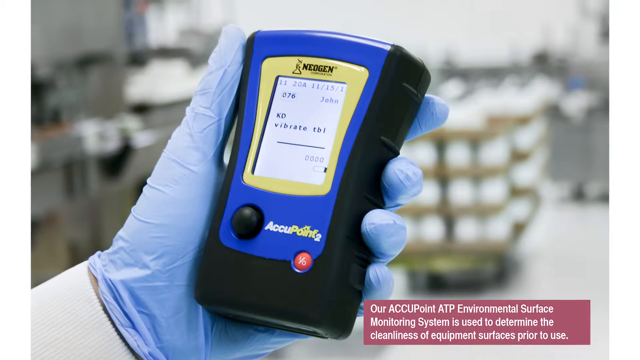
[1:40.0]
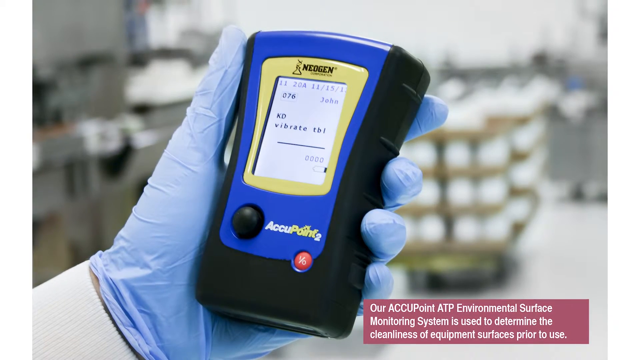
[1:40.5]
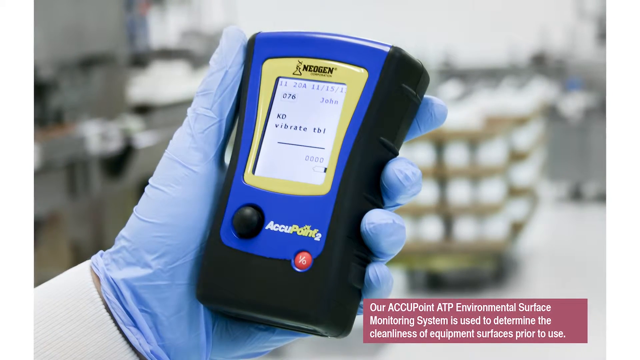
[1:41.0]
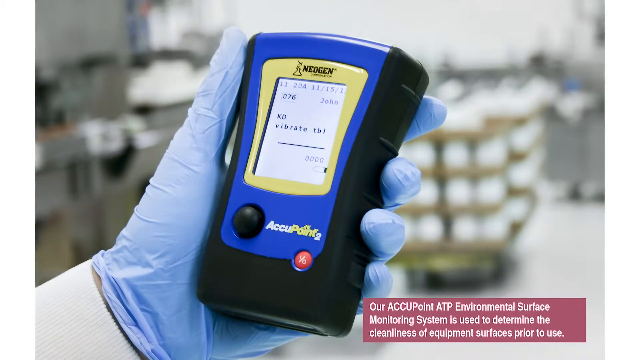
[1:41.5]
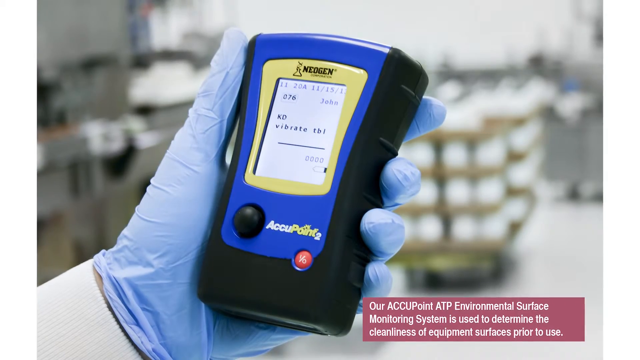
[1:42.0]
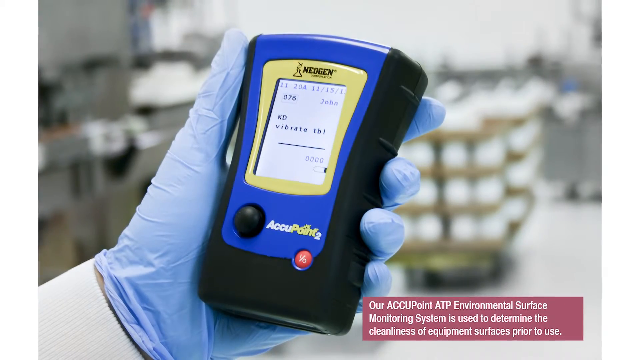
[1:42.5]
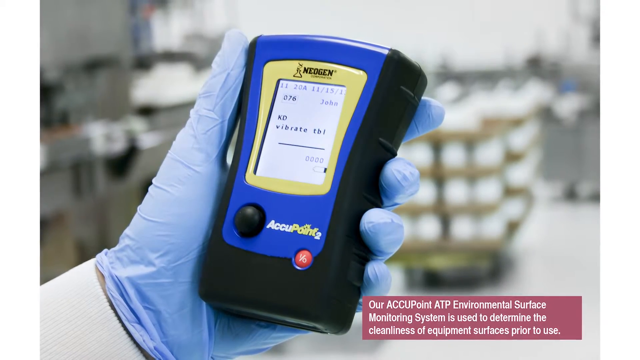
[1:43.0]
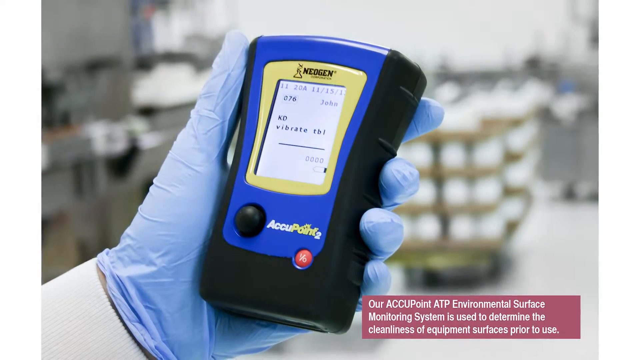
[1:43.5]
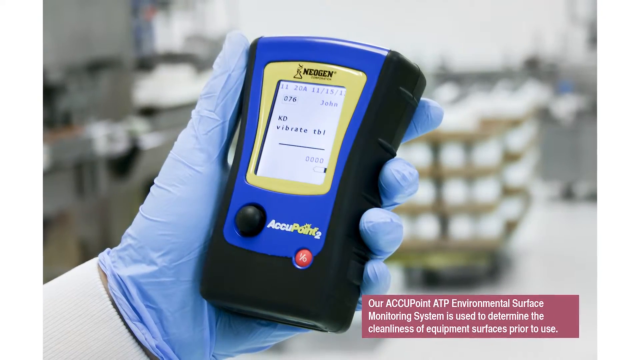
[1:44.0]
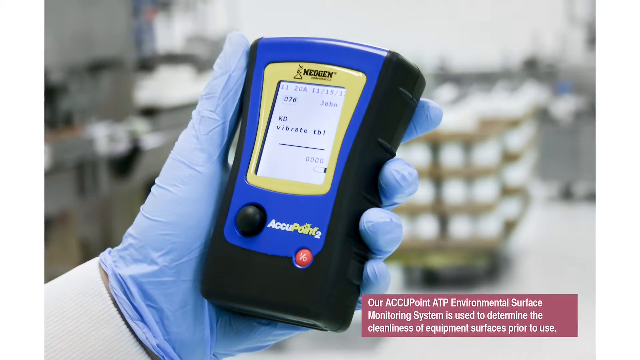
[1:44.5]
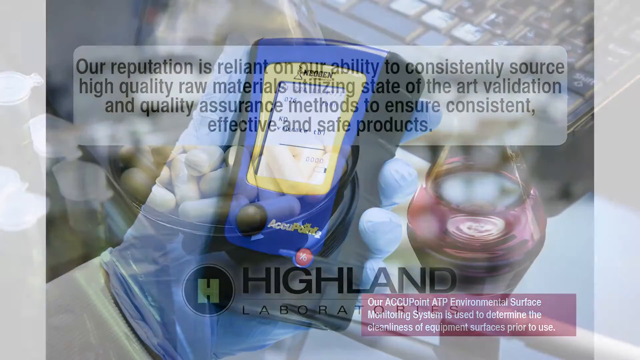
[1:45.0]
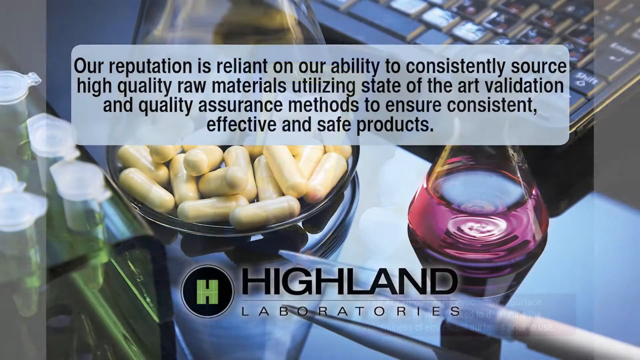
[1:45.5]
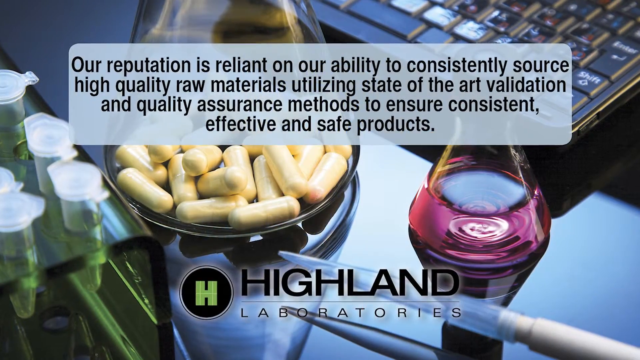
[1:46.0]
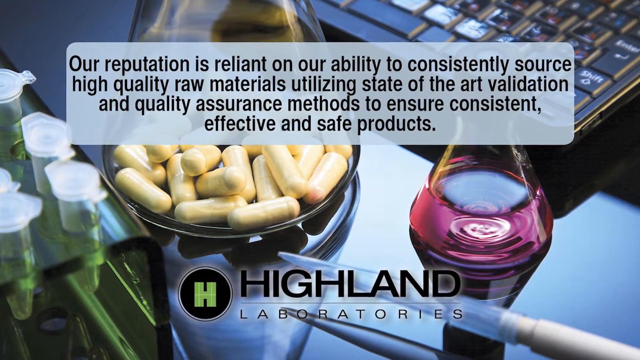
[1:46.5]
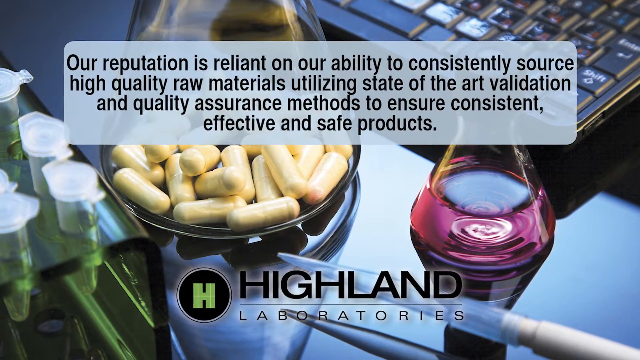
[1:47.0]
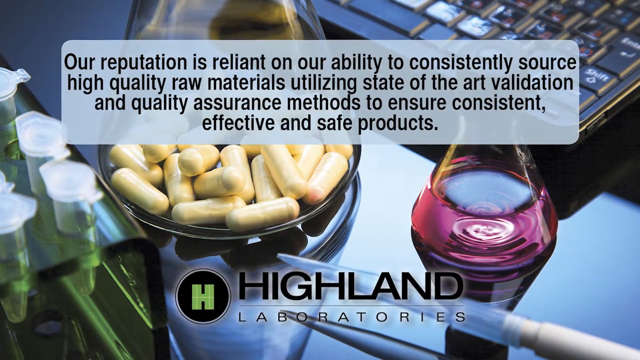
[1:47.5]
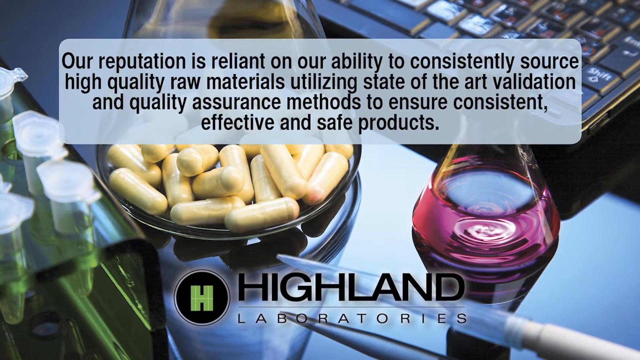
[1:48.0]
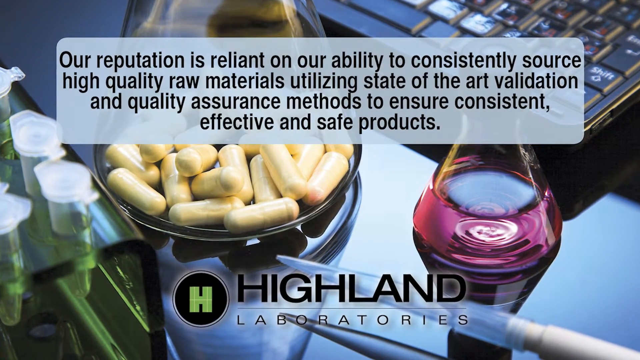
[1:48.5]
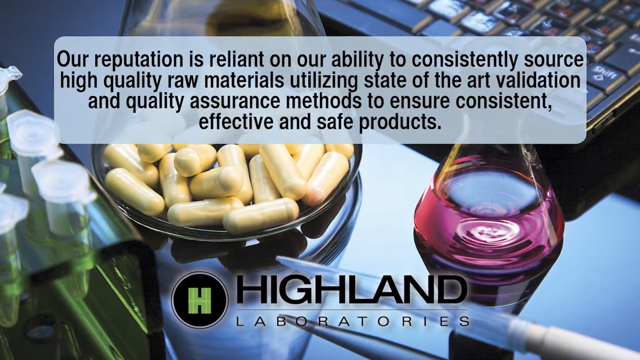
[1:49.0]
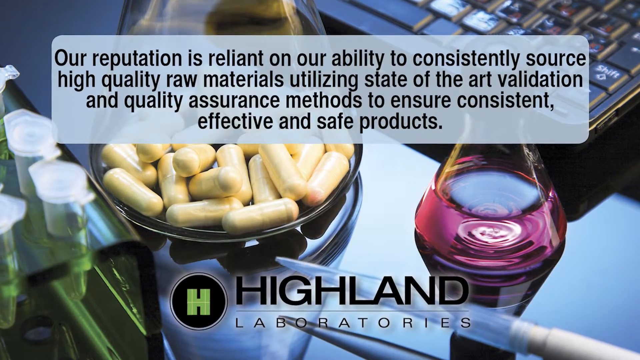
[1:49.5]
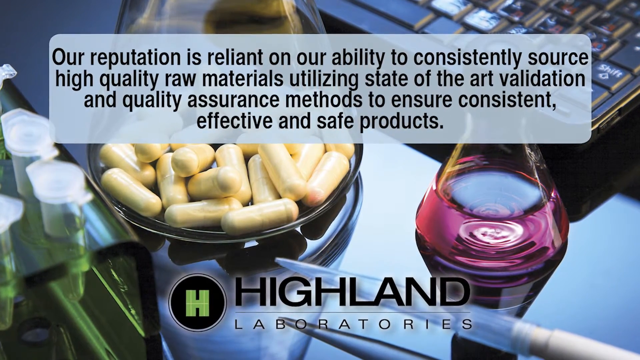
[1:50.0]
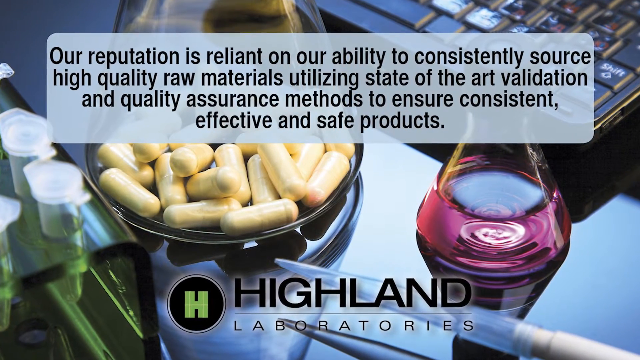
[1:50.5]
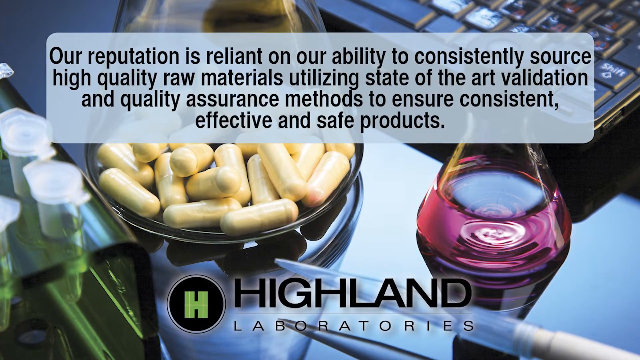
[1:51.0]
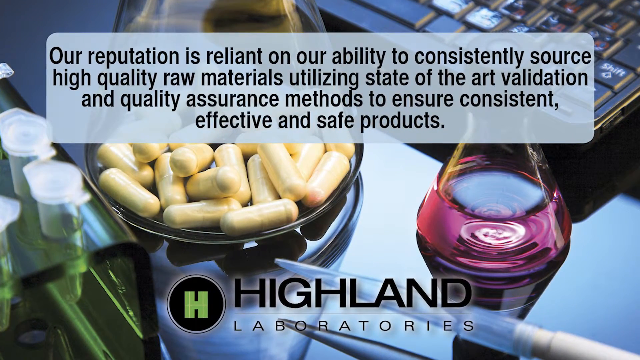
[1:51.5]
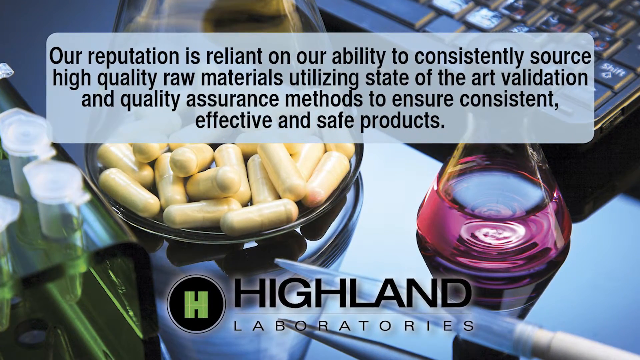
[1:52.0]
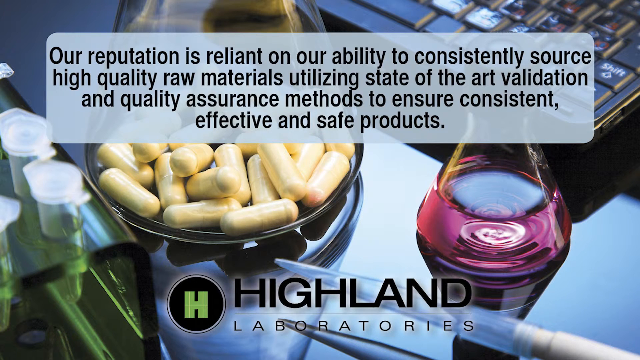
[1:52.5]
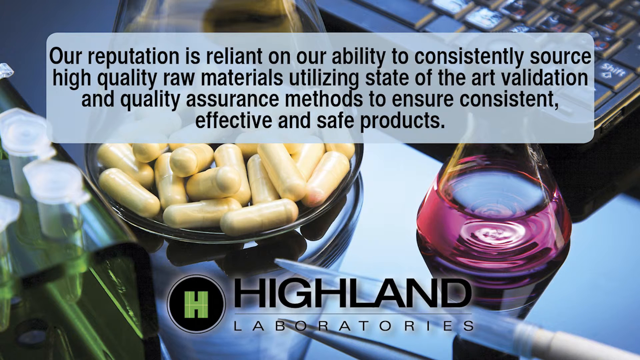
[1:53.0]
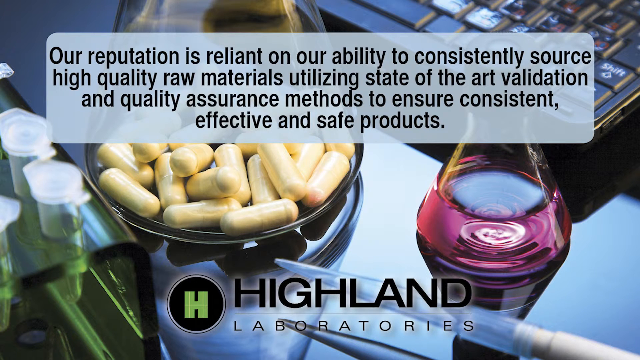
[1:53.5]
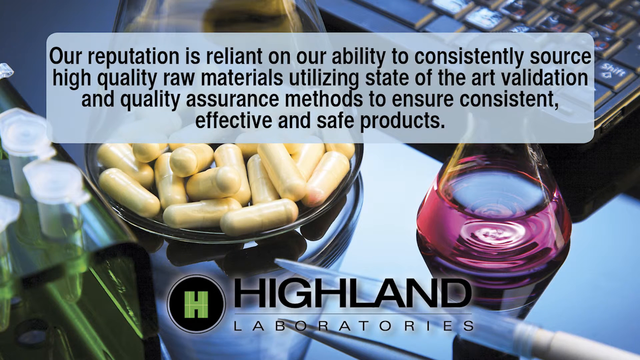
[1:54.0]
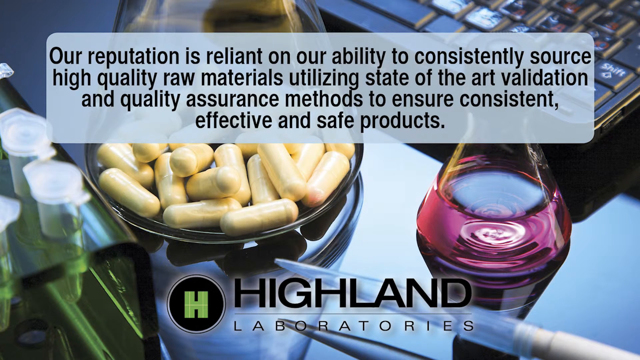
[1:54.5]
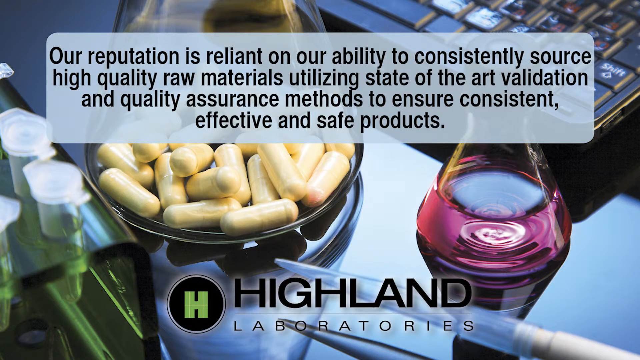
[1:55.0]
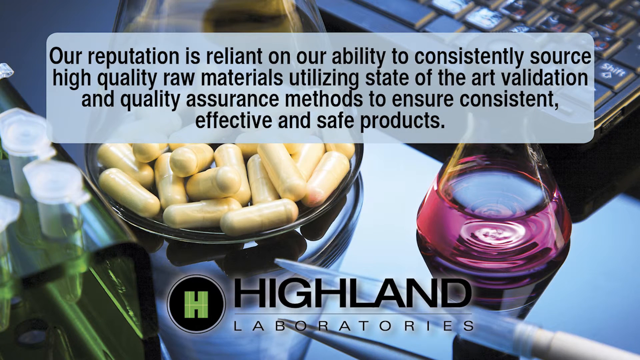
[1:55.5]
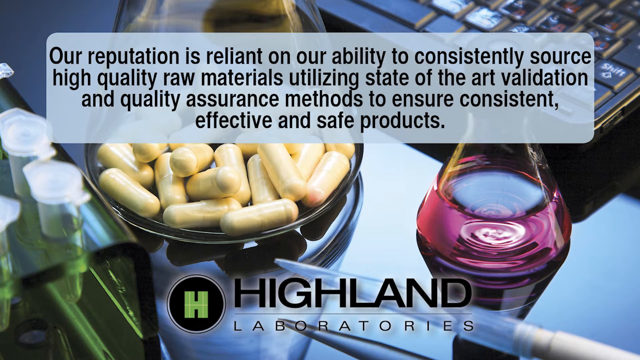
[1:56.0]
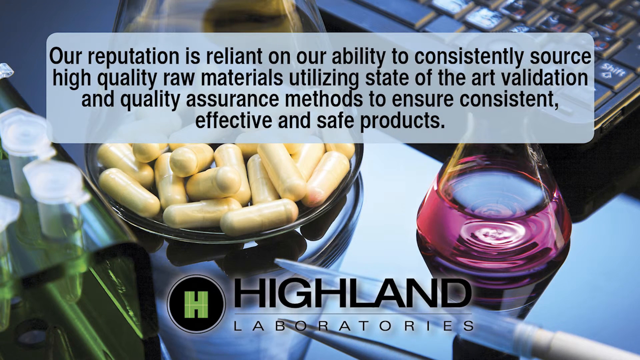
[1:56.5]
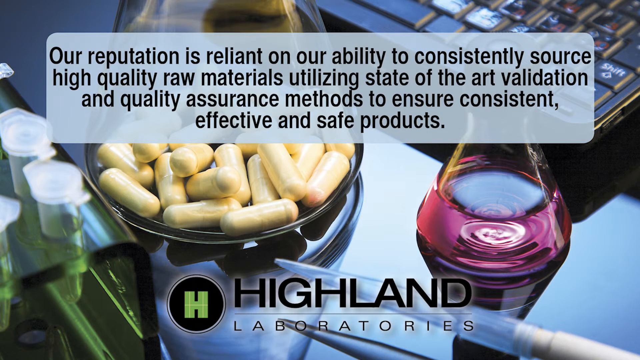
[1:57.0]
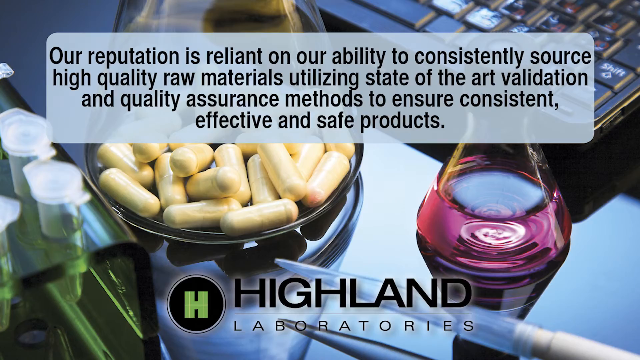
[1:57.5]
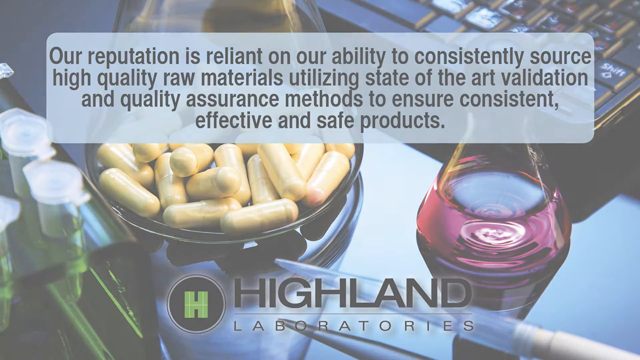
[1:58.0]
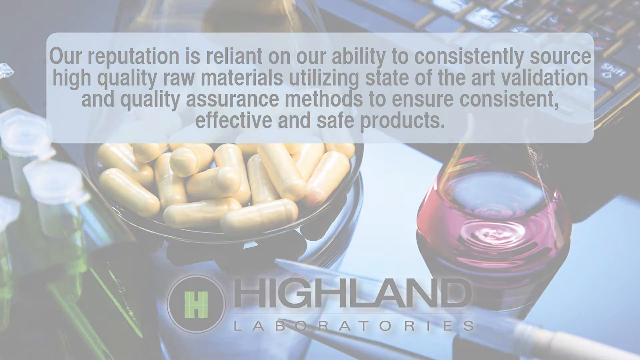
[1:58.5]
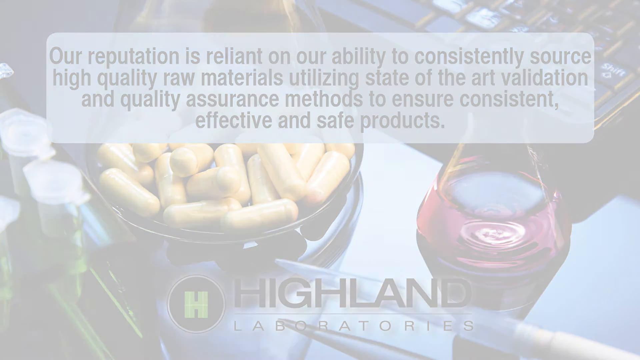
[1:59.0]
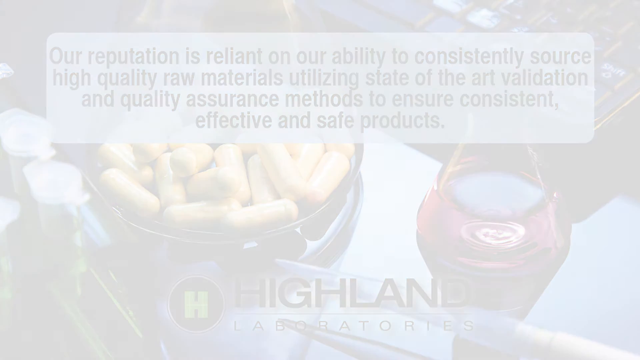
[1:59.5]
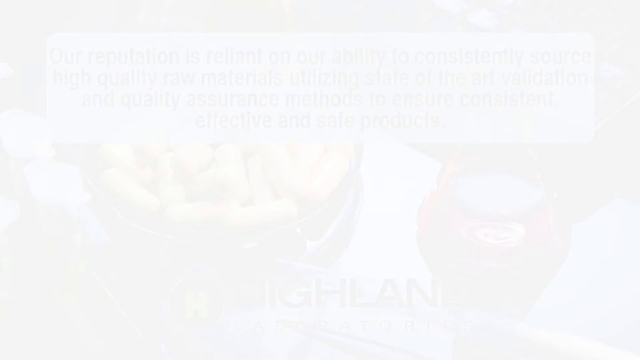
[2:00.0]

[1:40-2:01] A still photograph shows a person wearing a blue rubber glove holding some type of medical device, apparently in their left hand. The device is mostly rectangular, curves a little toward the top, and is blue and black with a screen. The room appears to be some type of warehouse-type room. The camera kind of pans out away from the hand and the device. A different, computer-generated image follows, with "Highland Laboratories" in the lower middle part of the picture. Above that is a white rectangular box with black text about the company's reputation and being effective and safe. Behind the text box are objects such as a computer keyboard and a small dish holding yellow capsule pills, along with other items.